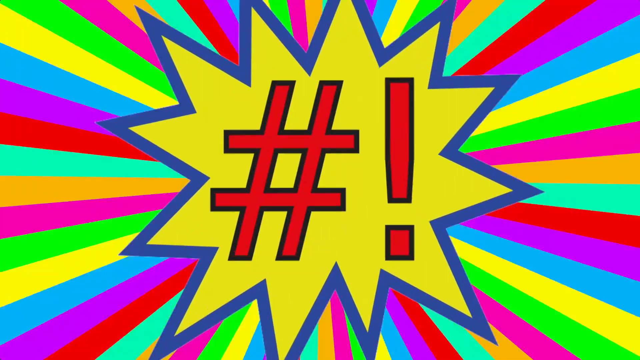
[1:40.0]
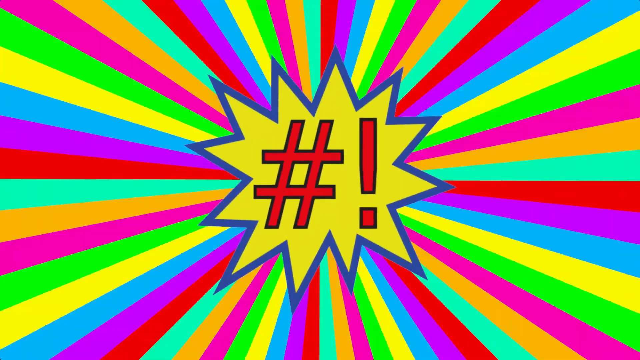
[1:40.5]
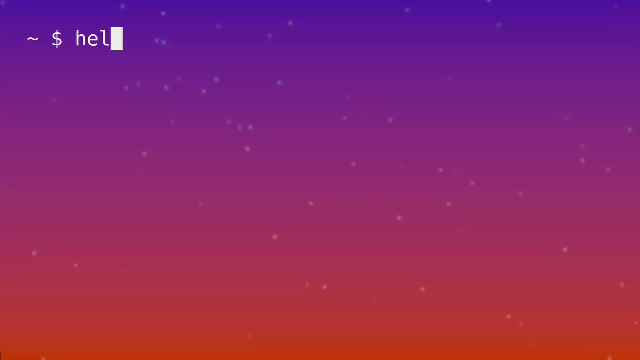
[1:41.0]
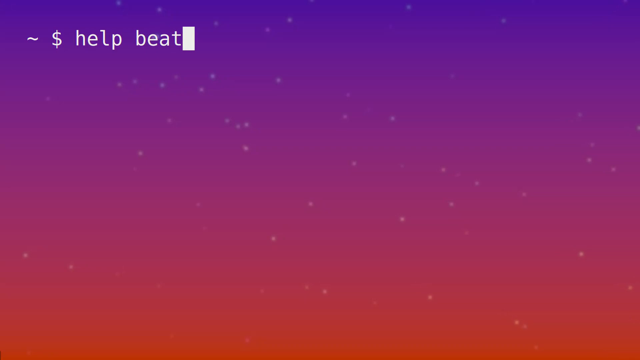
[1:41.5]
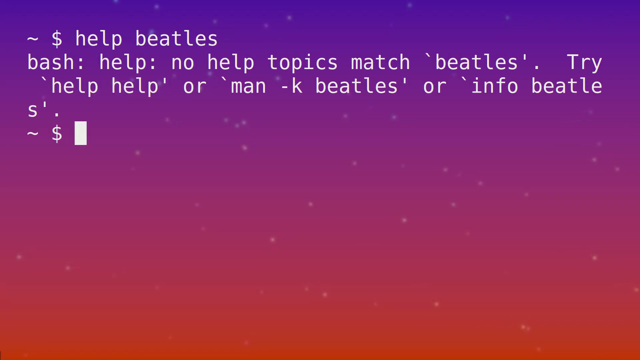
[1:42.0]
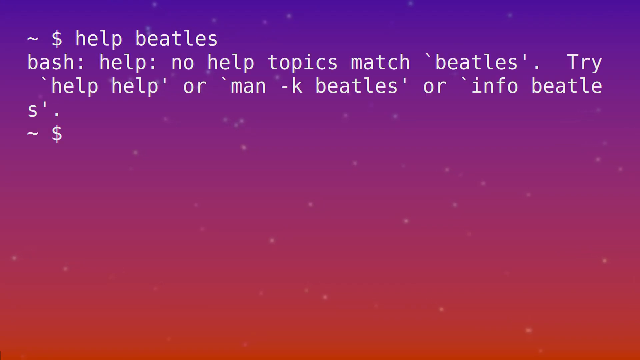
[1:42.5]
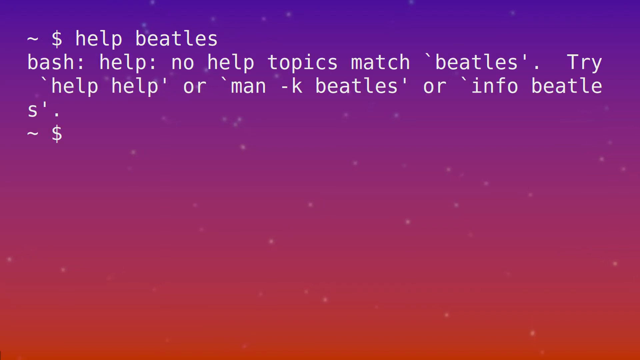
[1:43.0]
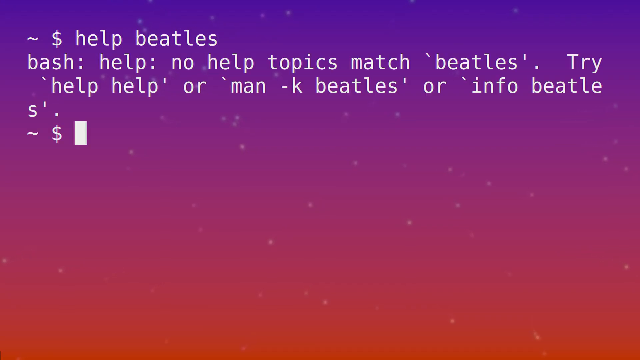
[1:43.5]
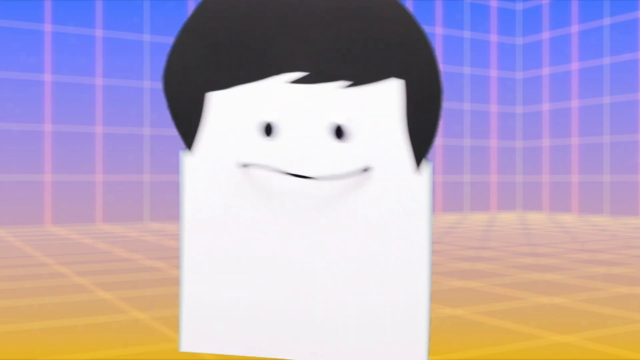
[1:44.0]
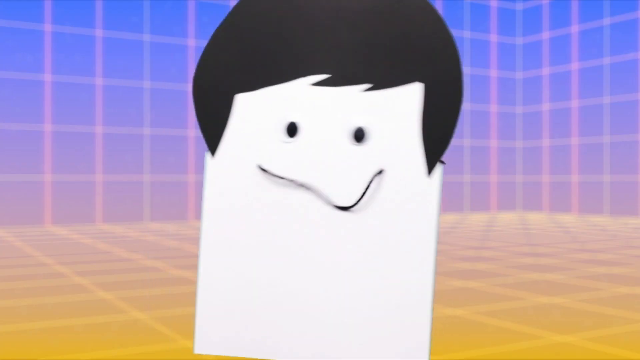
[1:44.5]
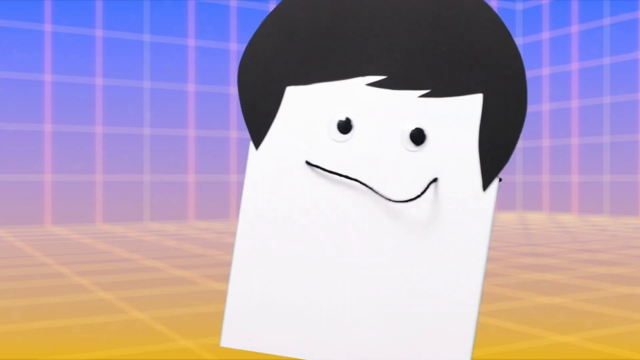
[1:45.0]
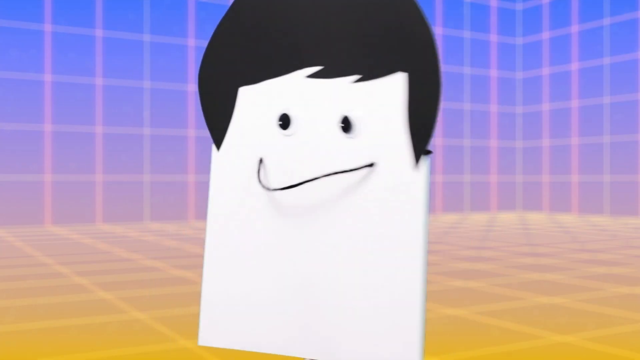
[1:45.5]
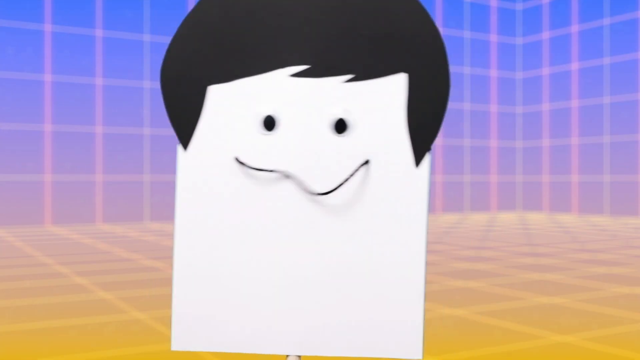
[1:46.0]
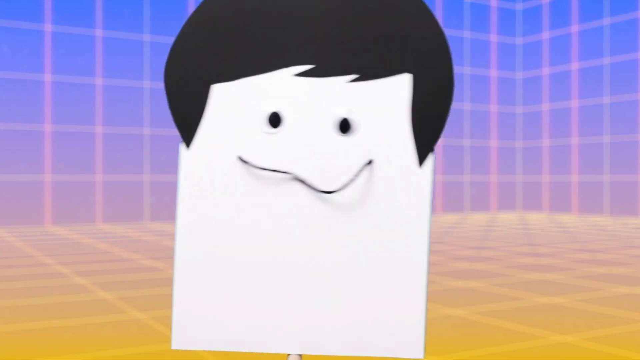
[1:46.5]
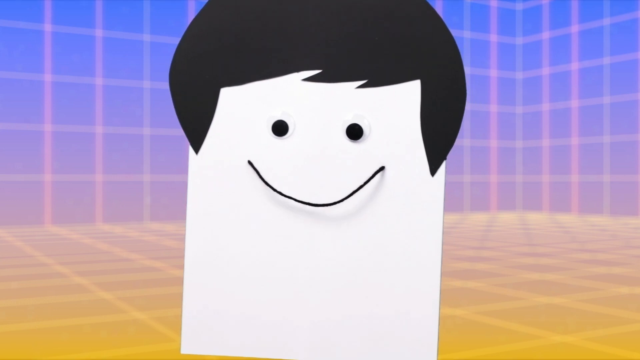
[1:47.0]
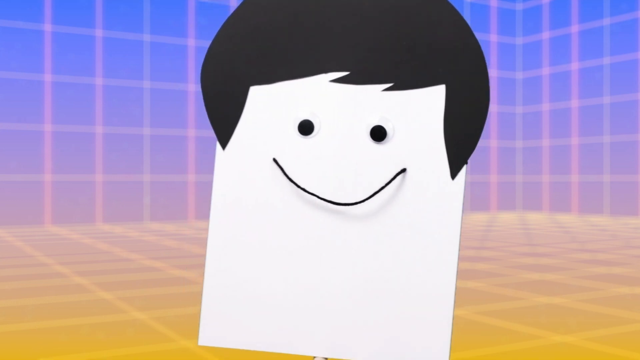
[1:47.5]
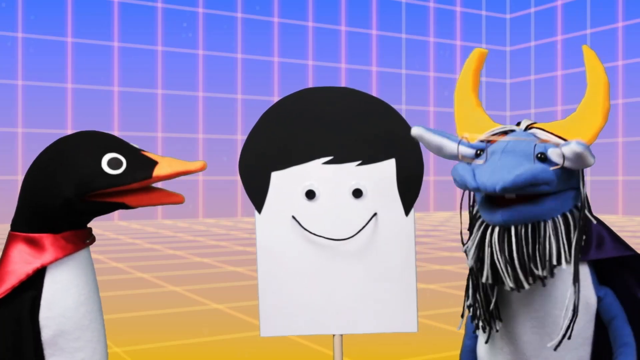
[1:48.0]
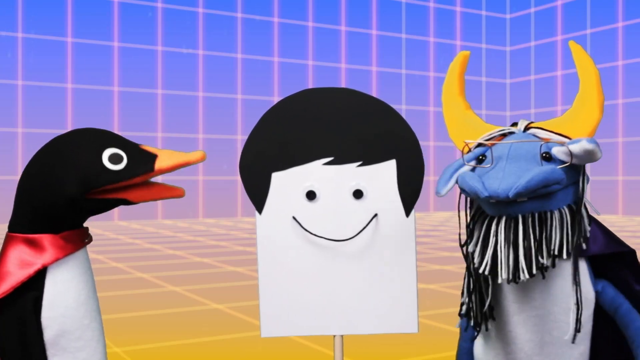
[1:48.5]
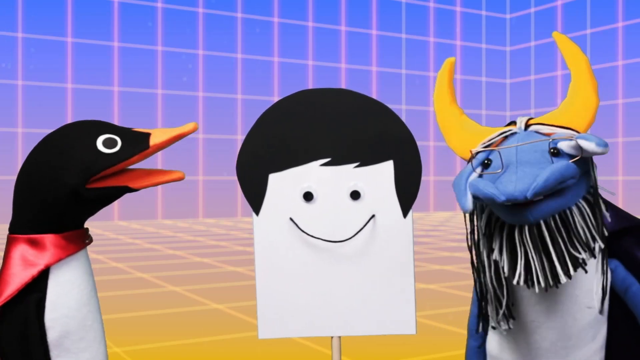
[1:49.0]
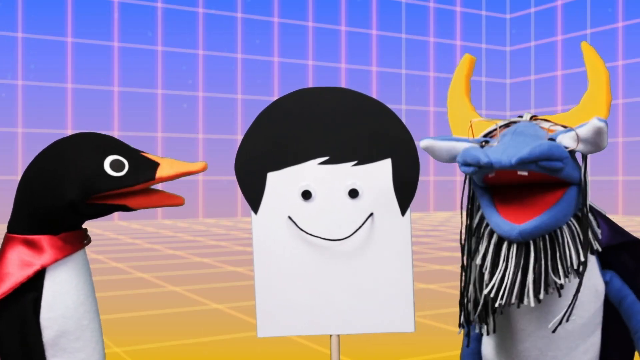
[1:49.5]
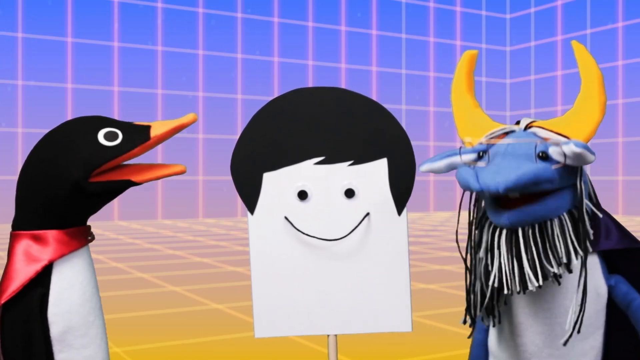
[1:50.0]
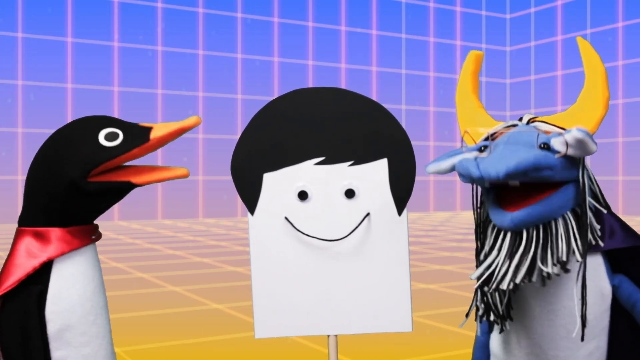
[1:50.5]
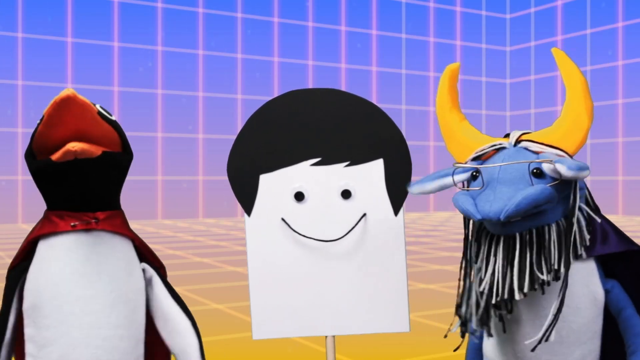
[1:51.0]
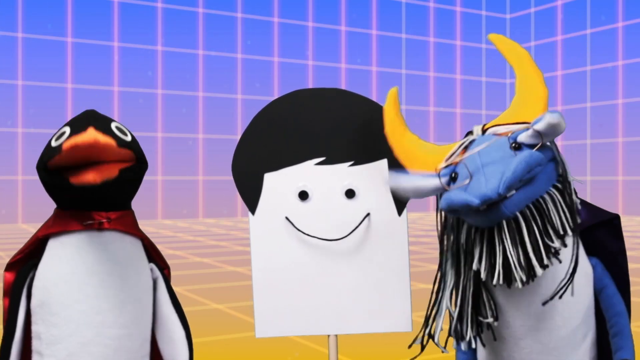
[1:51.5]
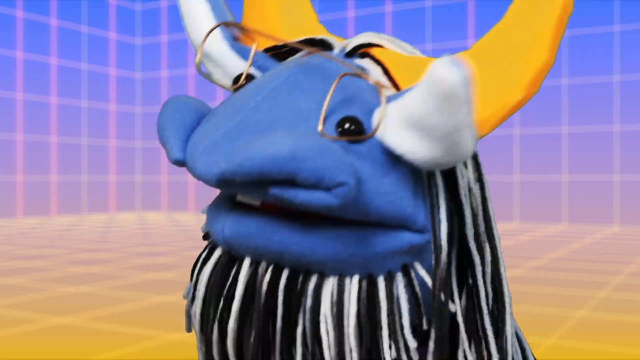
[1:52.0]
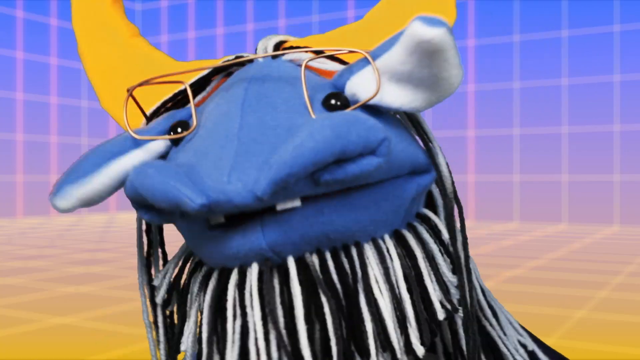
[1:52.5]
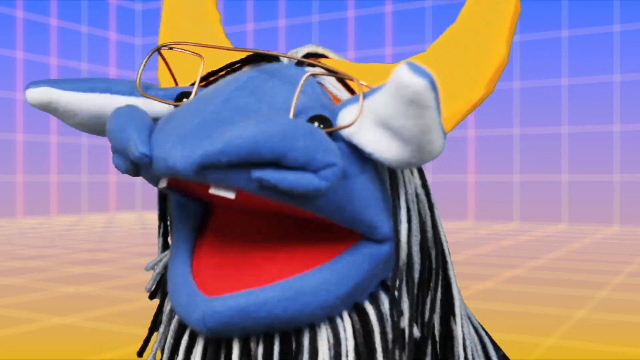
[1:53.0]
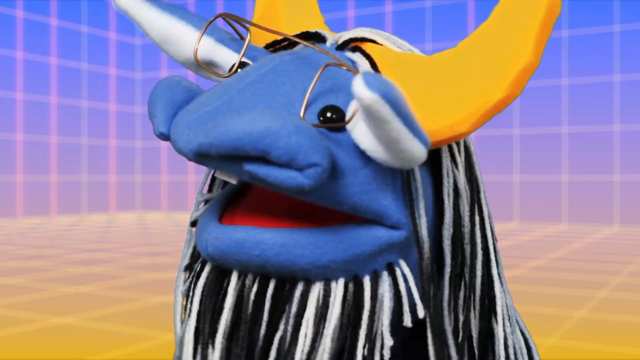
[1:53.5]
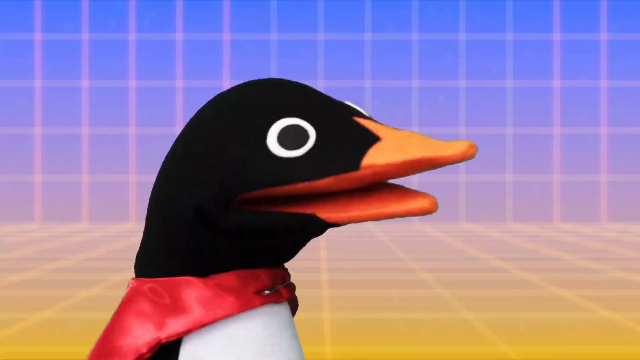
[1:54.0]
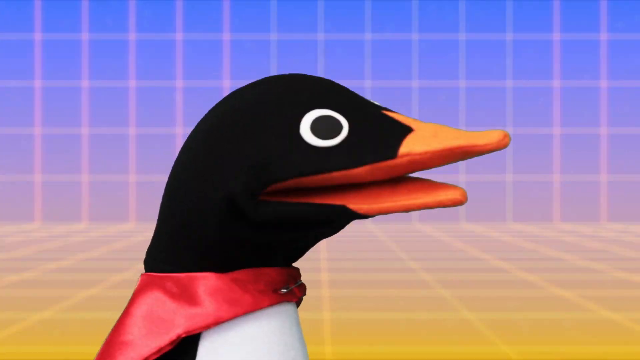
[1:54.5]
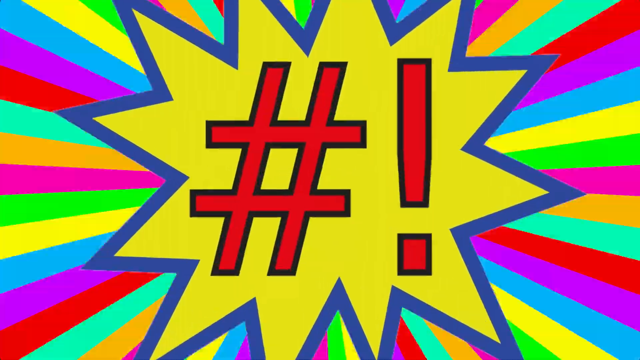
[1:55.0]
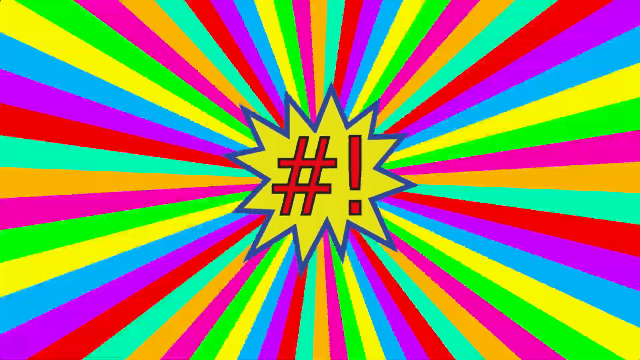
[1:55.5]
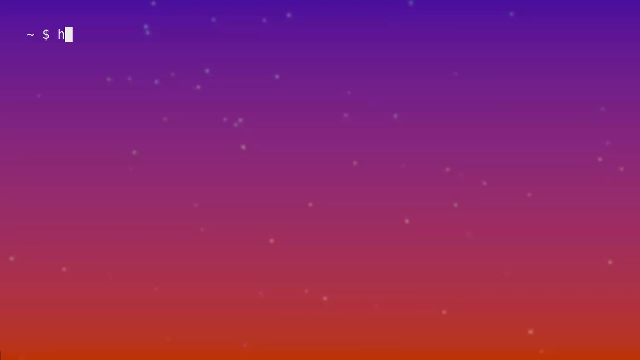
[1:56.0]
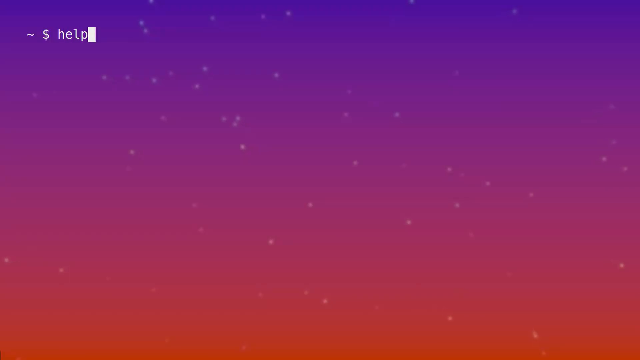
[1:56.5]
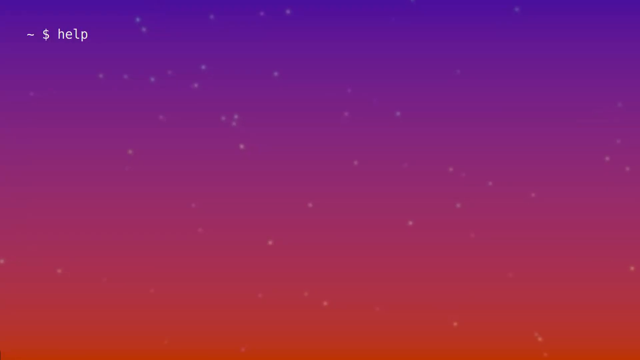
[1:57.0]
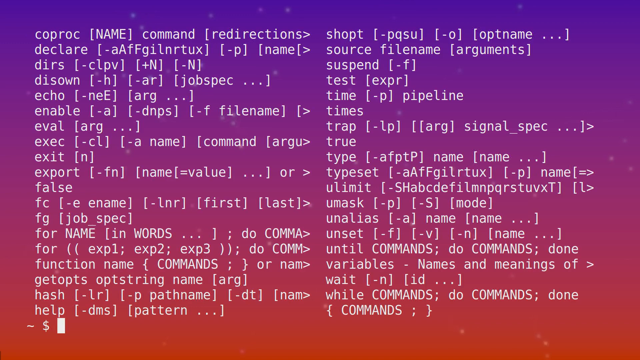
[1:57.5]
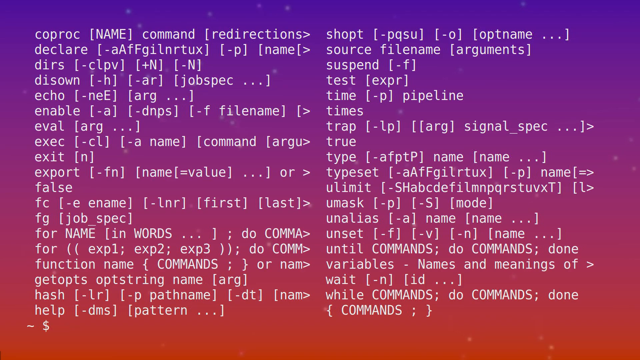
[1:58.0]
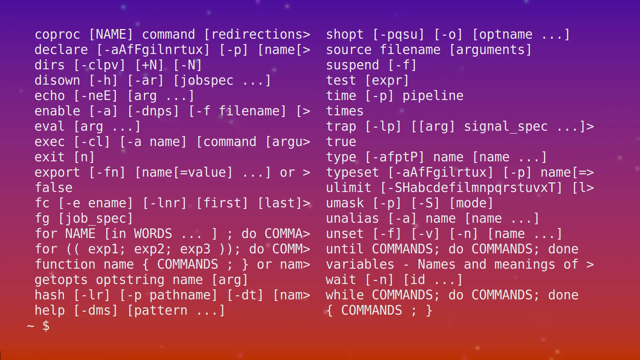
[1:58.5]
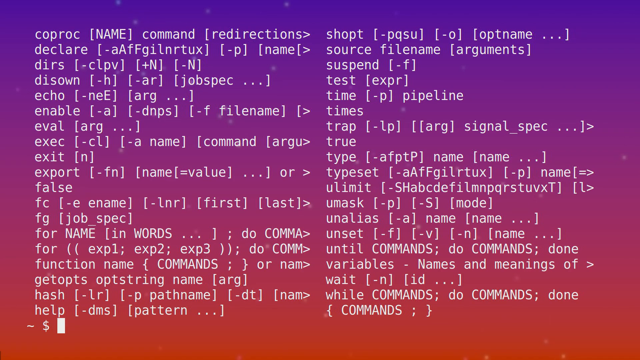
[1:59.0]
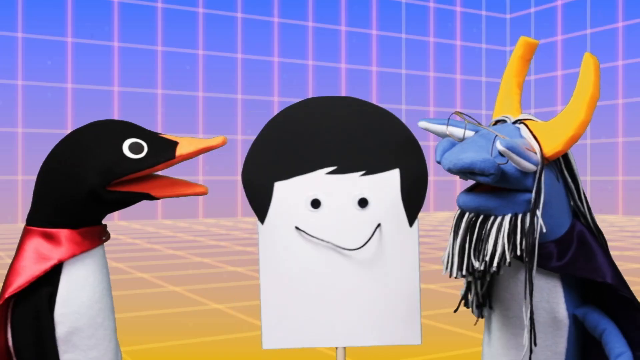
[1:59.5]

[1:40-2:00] The yellow starburst with the pound sign and exclamation point zooms in and out. Next, a background that looks kind of like a starry sky appears, and it also looks like the sun is setting, with a purplish hazy color. A computer terminal is shown, and the cursor types a command beginning with "help", after which some text comes up. The signpost character wags back and forth in the room with the grid floor and grid walls. In the grid room, the gnu is on the right side of the signpost man, talking quite a bit, its head nodding up and down as its mouth opens, and the penguin appears to nod its head up and down while the gnu talks. The penguin turns to its right to look directly into the camera and nods. The shot then zooms in on the gnu's face as it talks.